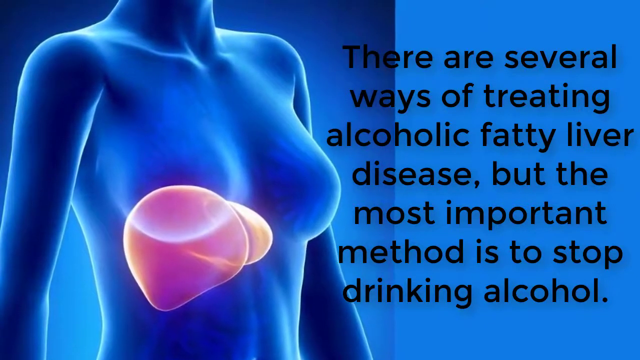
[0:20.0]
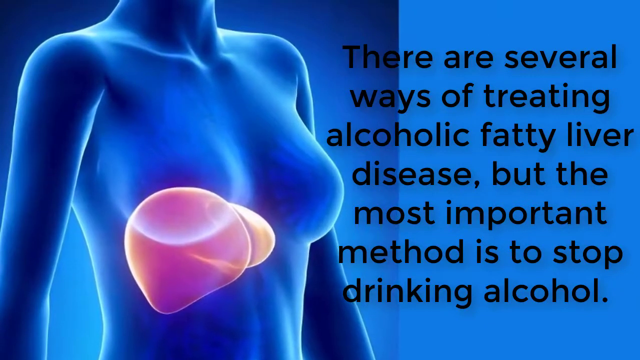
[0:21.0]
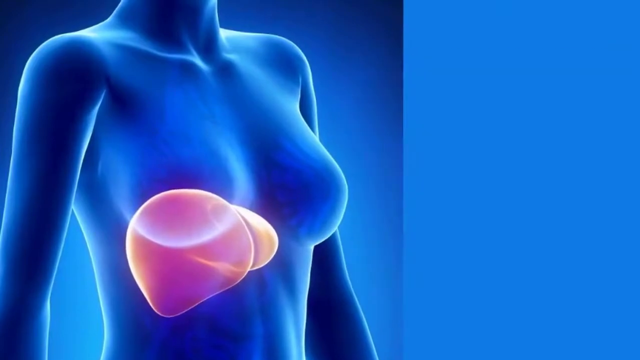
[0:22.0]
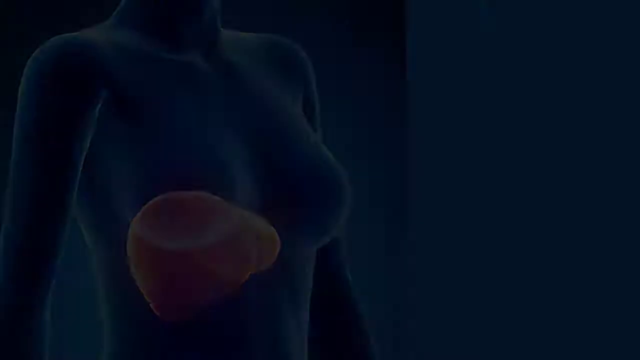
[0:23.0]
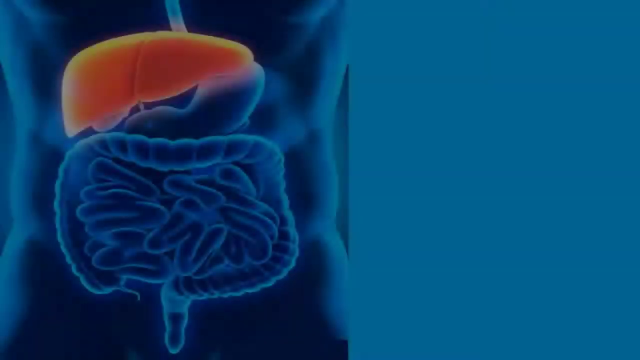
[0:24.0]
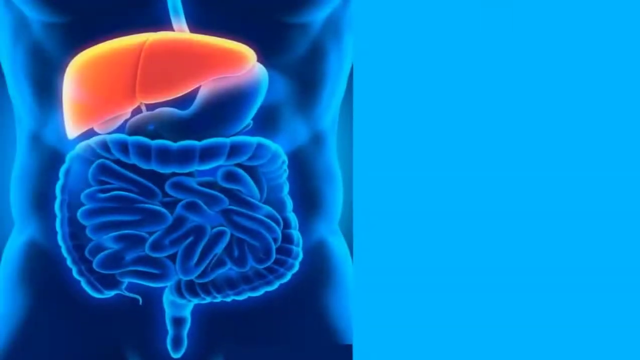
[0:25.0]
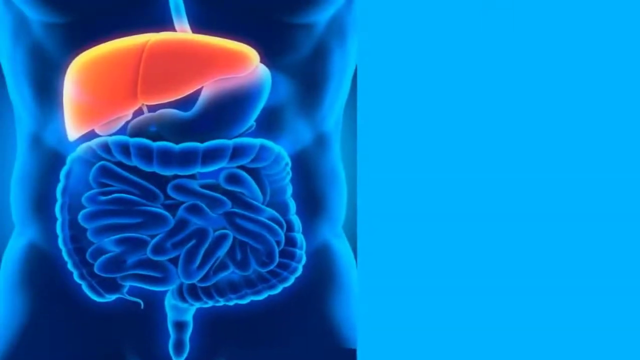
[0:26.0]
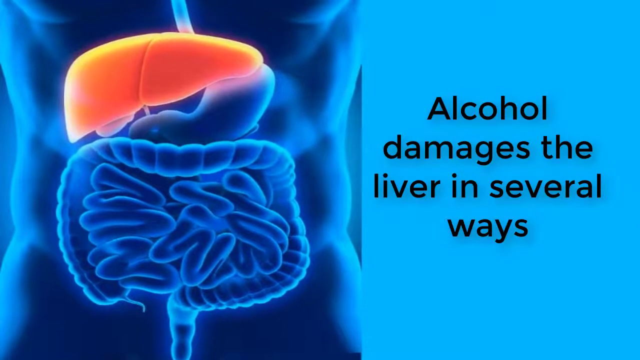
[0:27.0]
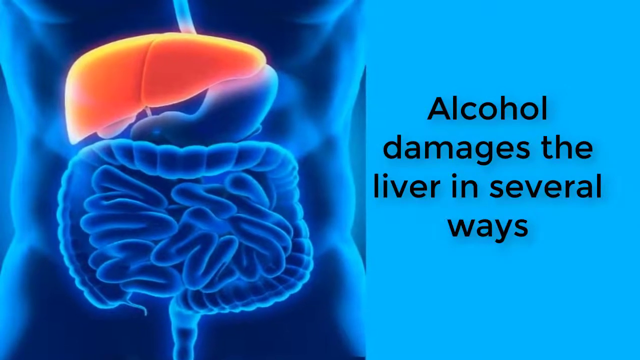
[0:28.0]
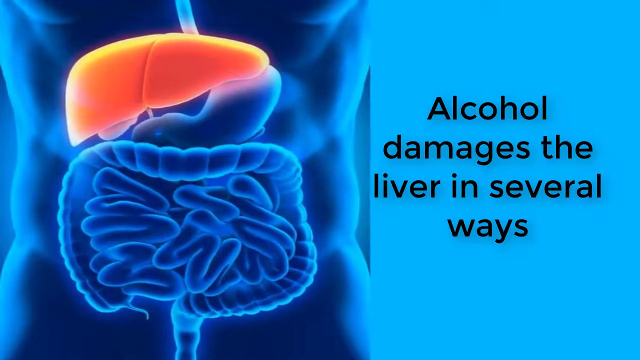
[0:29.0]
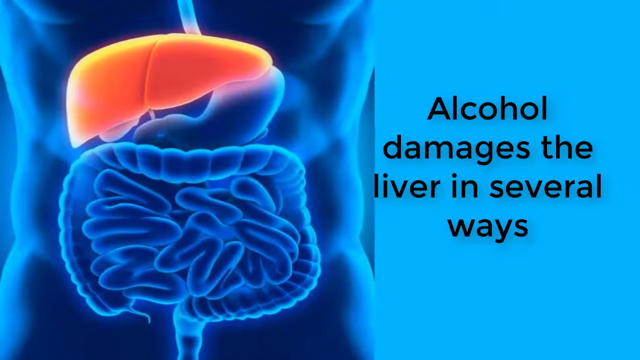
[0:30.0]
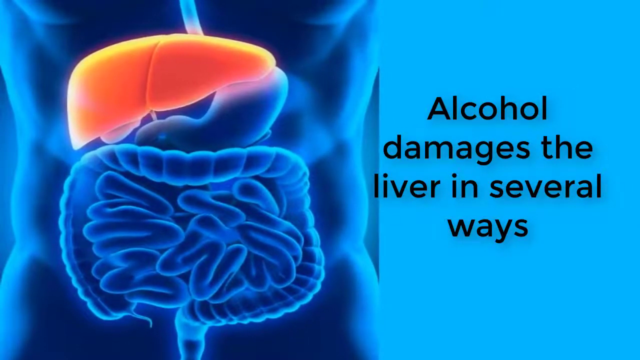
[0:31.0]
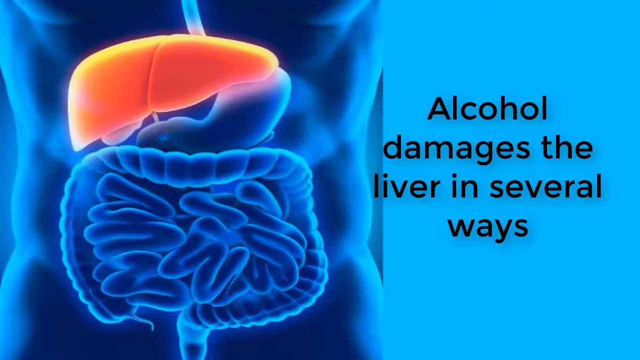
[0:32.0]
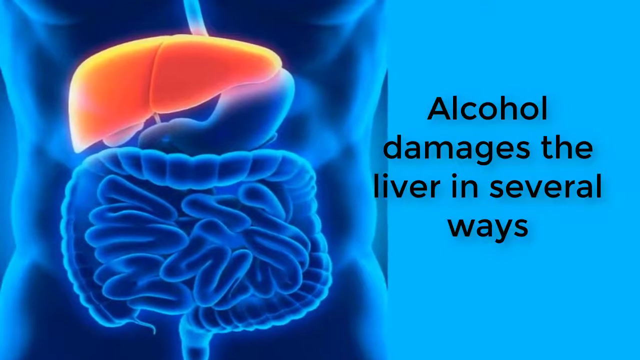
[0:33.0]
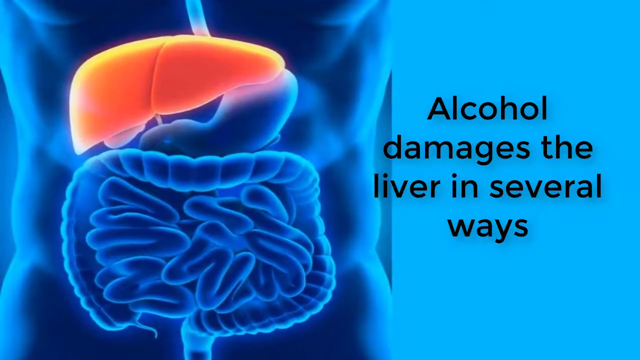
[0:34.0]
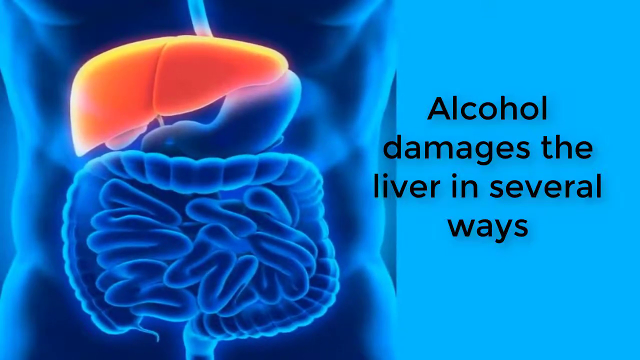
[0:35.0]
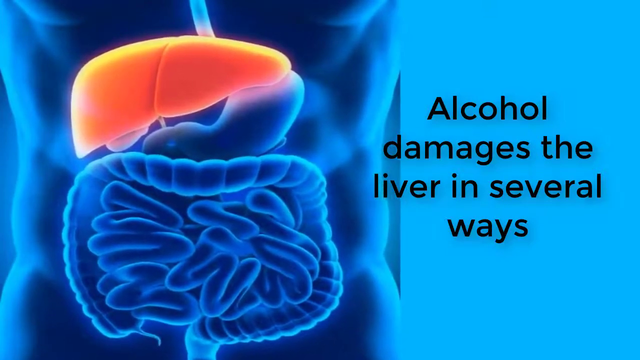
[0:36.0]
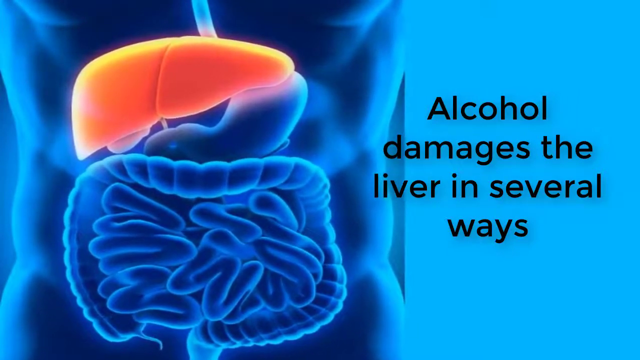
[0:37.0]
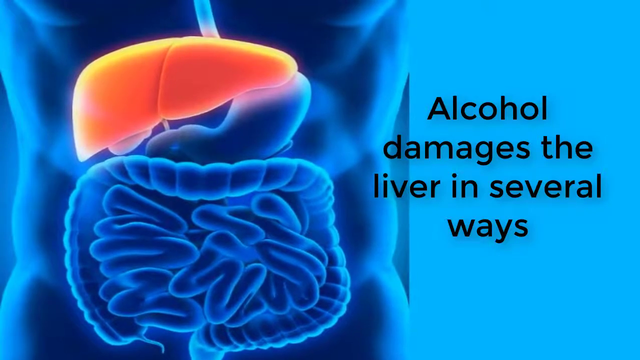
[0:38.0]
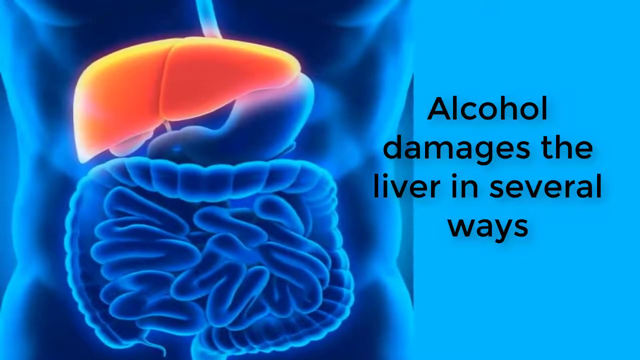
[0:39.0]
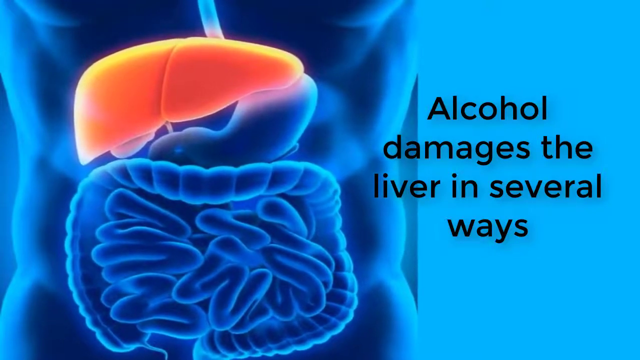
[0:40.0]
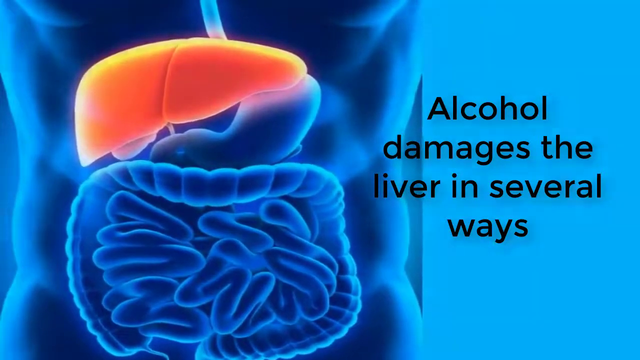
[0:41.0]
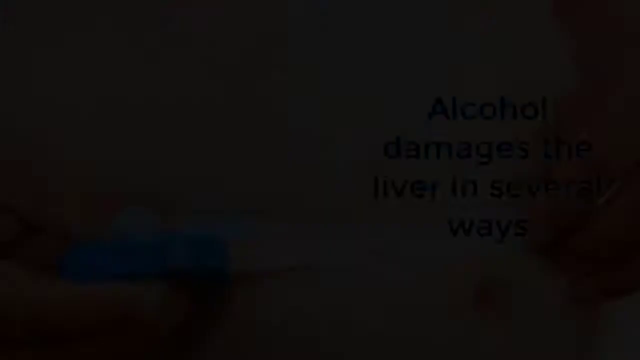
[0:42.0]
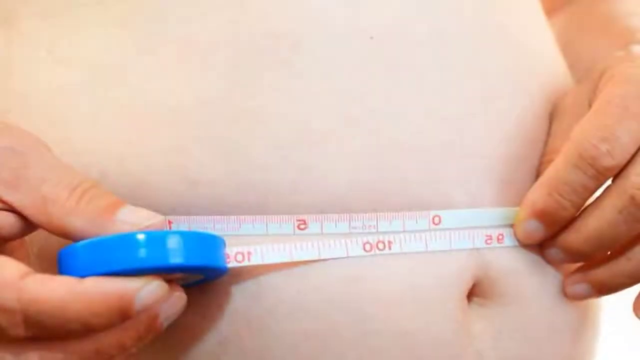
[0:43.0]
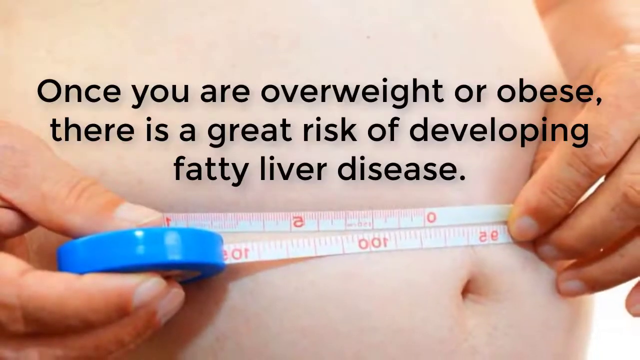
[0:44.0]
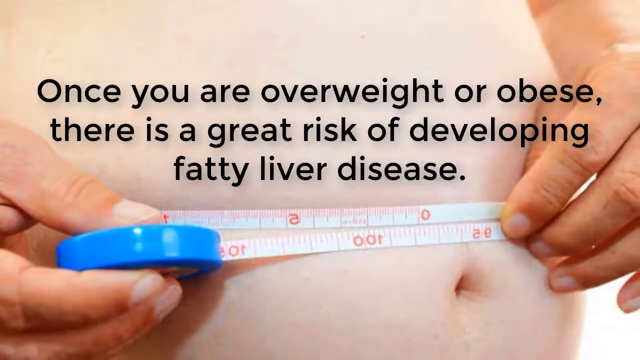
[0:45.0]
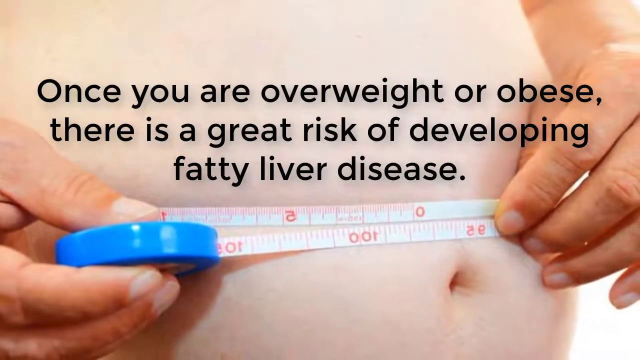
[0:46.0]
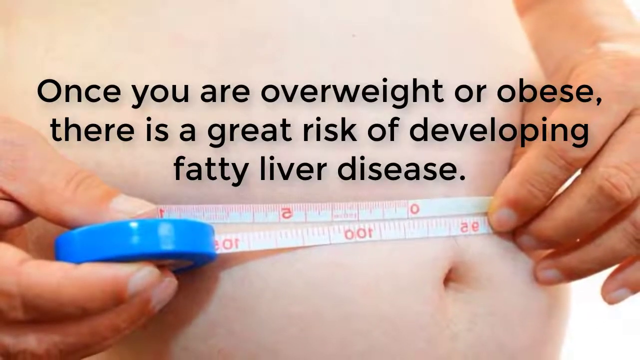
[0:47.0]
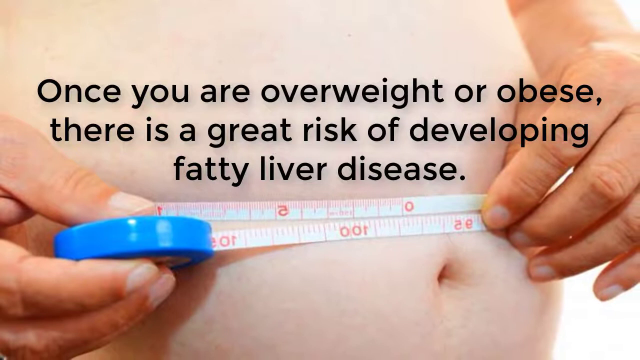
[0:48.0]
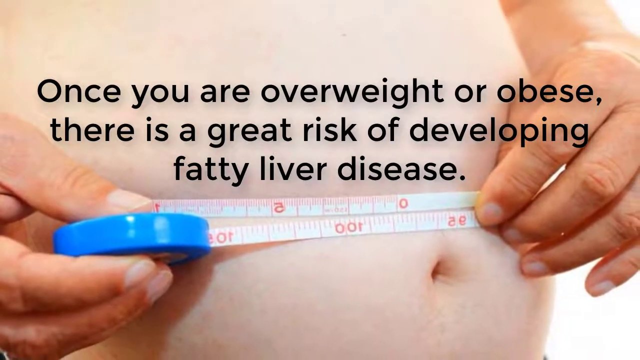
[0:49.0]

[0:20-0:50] The woman's body moves closer, then the screen goes black and a new image of another part of the human body emerges. On the left side of the screen is what looks like the intestines: something almost like a tube coiled around and around, inside a slightly larger tube running around its perimeter. Above it are orange and blue shapes, possibly the liver seen over the intestine. Black text appears on the right side of the screen: "Alcohol damages the liver in several ways." The image comes closer into focus, with the torso of the body visible in the background, getting closer and closer before fading to dark. Next, a person's bare midriff is shown without their head. The fingers of both hands hold a measuring tape across the stomach just above the belly button, and black text above reads "Once you are overweight or obese, there is a great risk of developing fatty liver disease." The camera zooms back, showing the person's hands more fully as they measure.